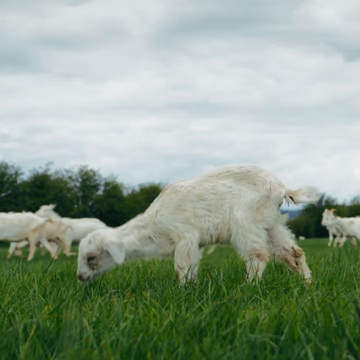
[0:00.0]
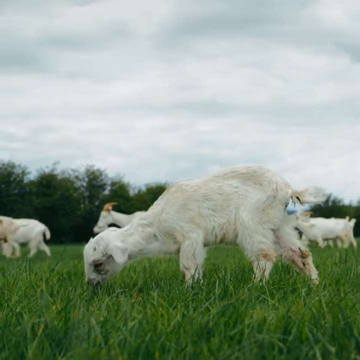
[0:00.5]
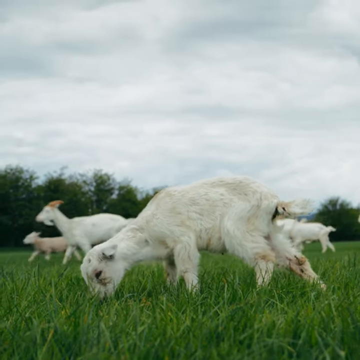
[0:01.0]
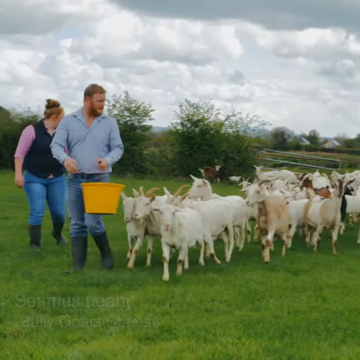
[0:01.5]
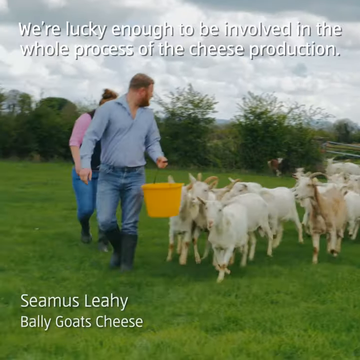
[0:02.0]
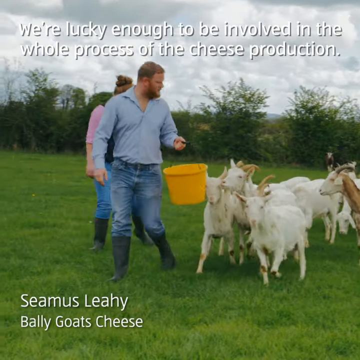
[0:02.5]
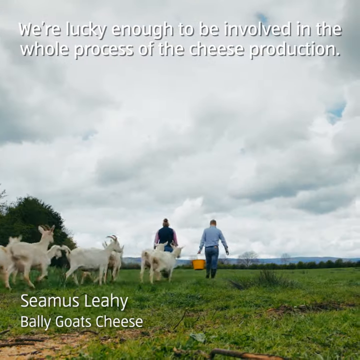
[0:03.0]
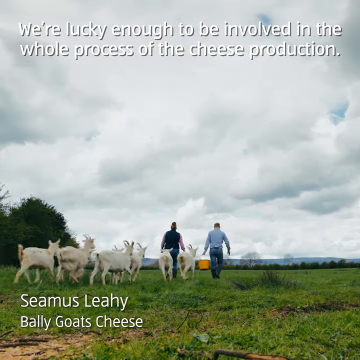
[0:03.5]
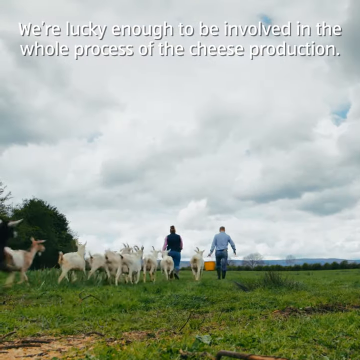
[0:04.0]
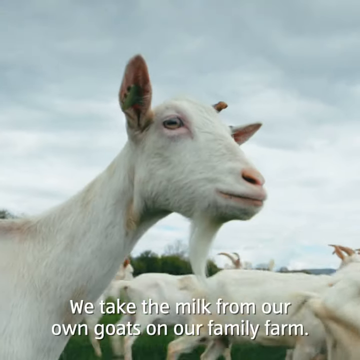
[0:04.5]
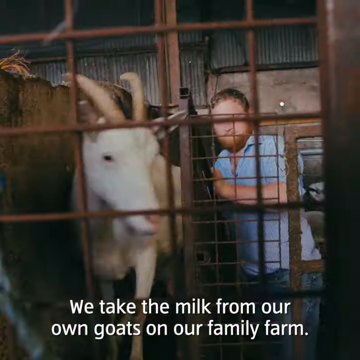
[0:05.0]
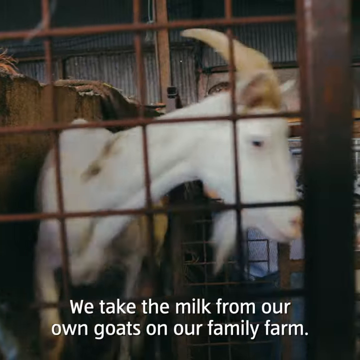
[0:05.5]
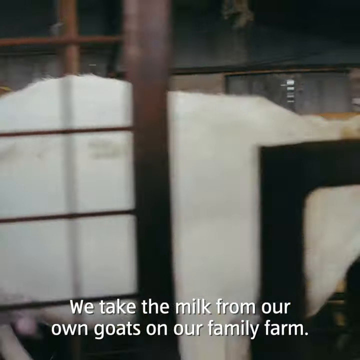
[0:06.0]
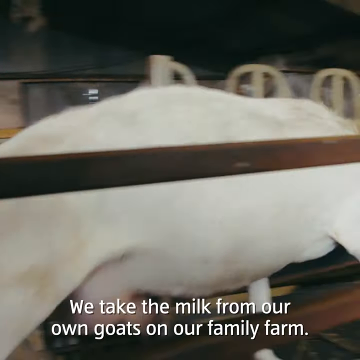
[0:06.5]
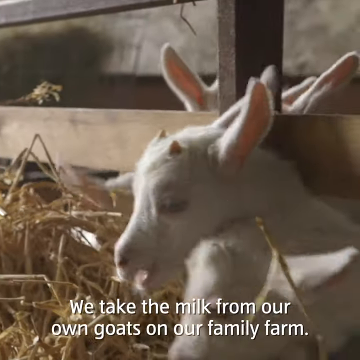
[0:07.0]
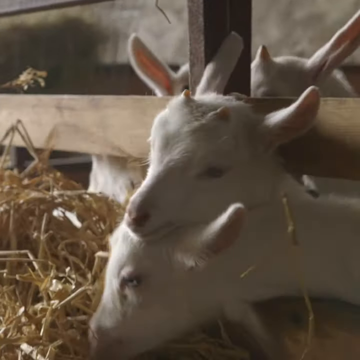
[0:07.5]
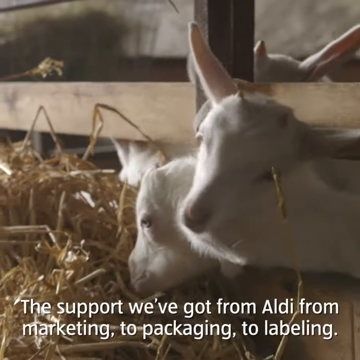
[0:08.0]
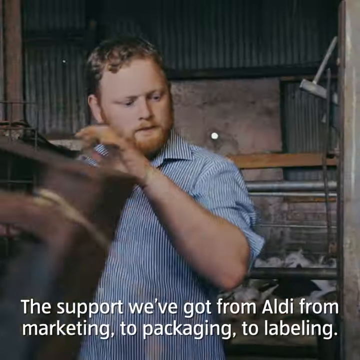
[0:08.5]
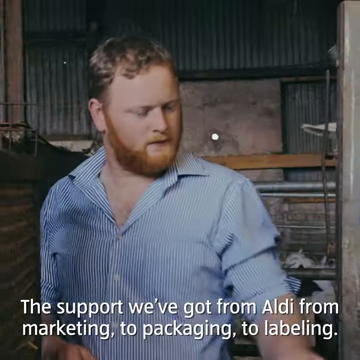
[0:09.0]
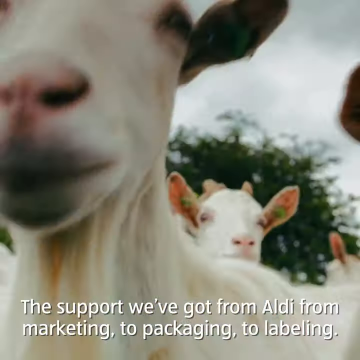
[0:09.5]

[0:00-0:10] A goat appears up close. Text at the top of the screen reads "we're lucky enough to be involved in the whole process of the cheese production." Two people, a girl and a guy, carry a bucket, and the Bally goats follow them. The man's name is Seamus Leahy. Text reads "we take the milk from our own goats," along with mention of the support received from Aldi, from marketing to packaging to labeling. The goats graze in a field and run, following the people for the food in the buckets. The goat milk and cheese are processed and marketed through Aldi, and the farm is possibly not in the United States.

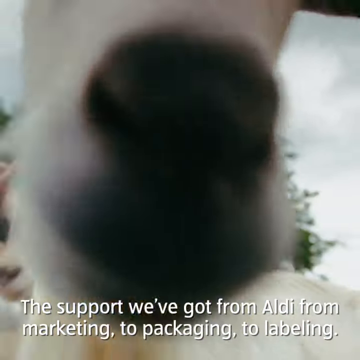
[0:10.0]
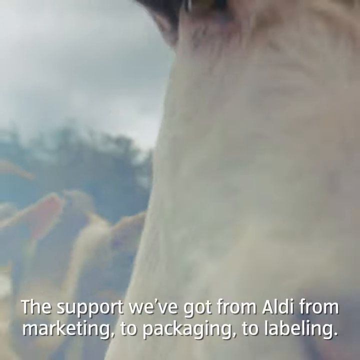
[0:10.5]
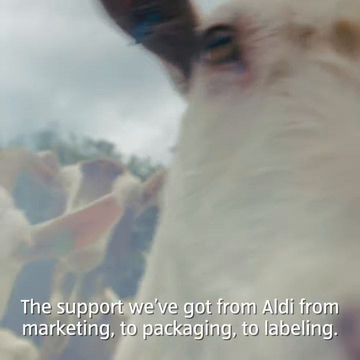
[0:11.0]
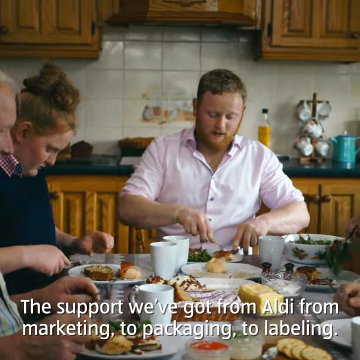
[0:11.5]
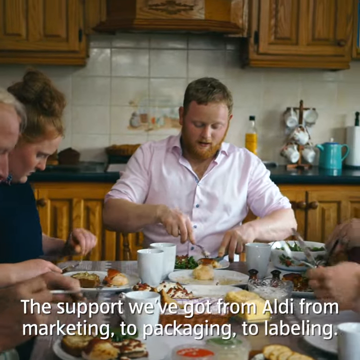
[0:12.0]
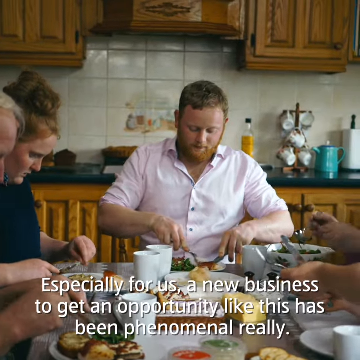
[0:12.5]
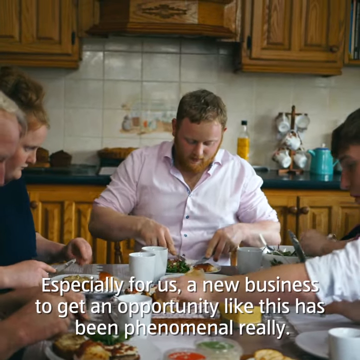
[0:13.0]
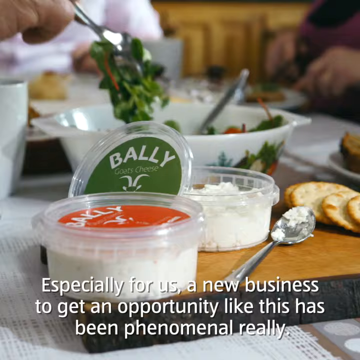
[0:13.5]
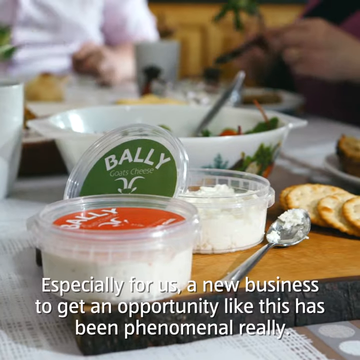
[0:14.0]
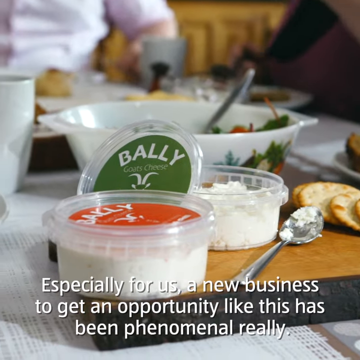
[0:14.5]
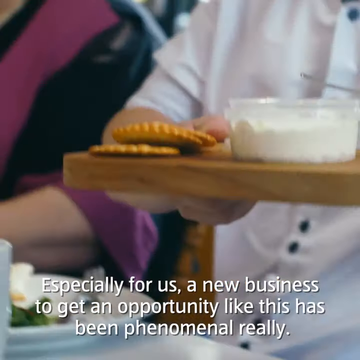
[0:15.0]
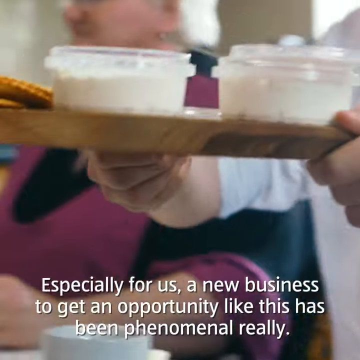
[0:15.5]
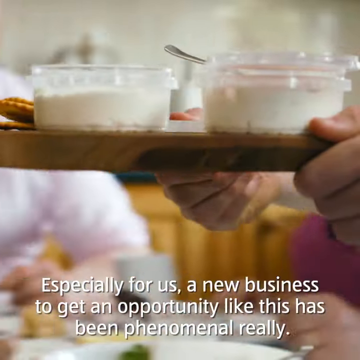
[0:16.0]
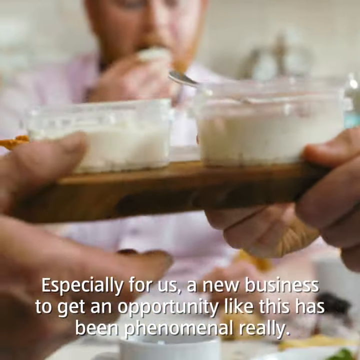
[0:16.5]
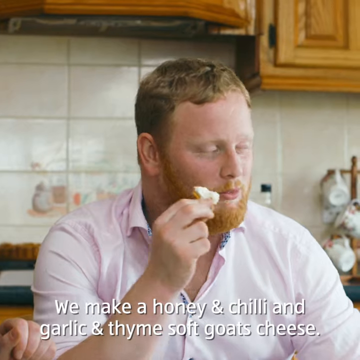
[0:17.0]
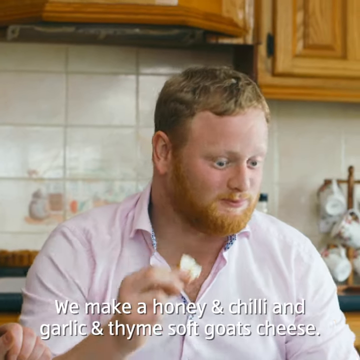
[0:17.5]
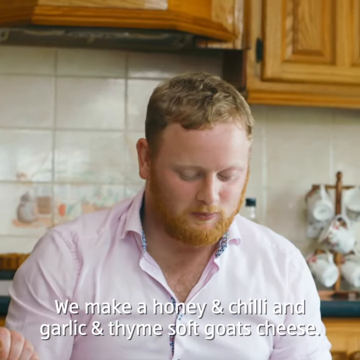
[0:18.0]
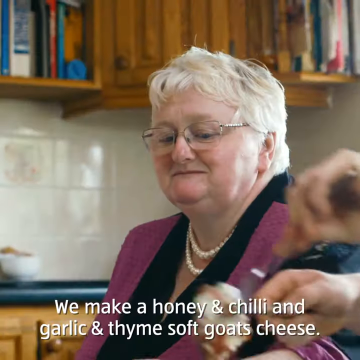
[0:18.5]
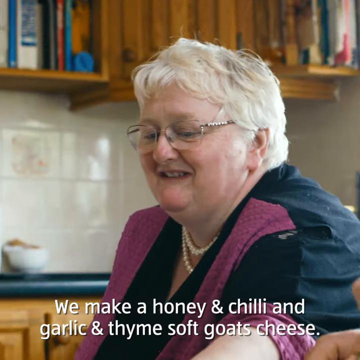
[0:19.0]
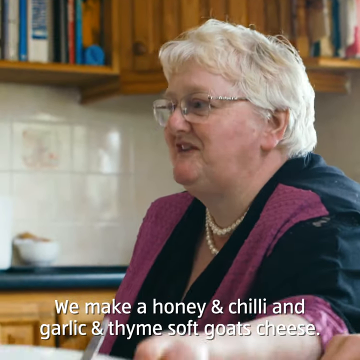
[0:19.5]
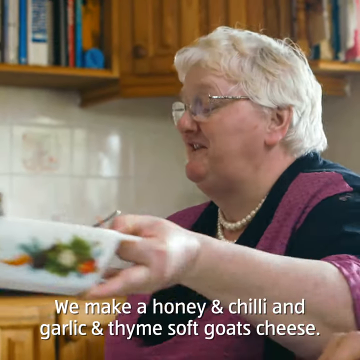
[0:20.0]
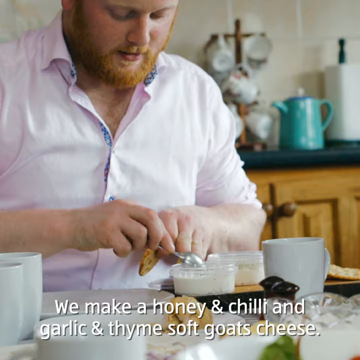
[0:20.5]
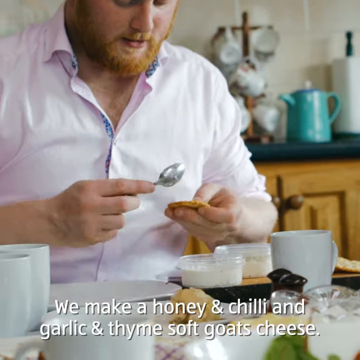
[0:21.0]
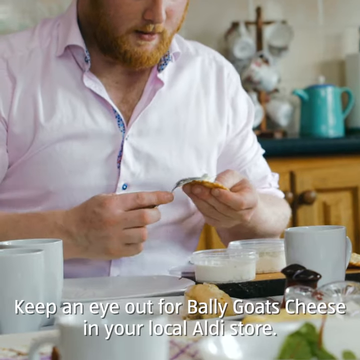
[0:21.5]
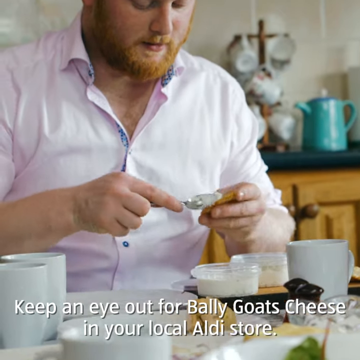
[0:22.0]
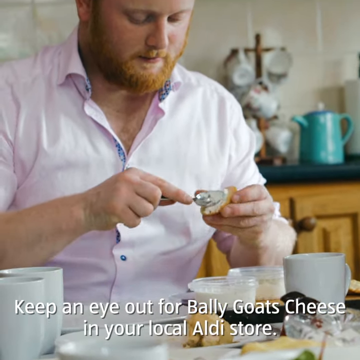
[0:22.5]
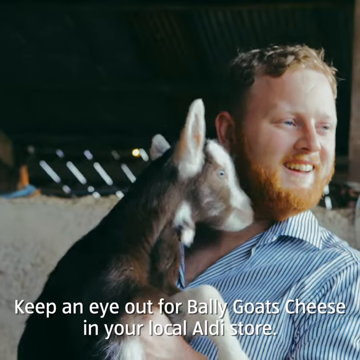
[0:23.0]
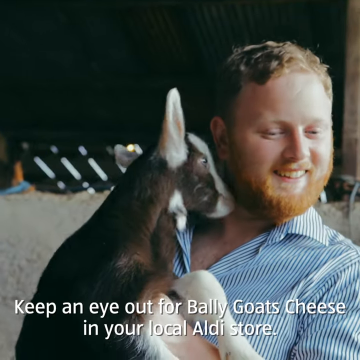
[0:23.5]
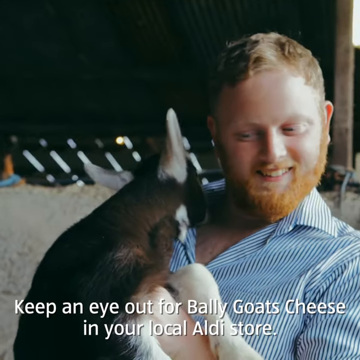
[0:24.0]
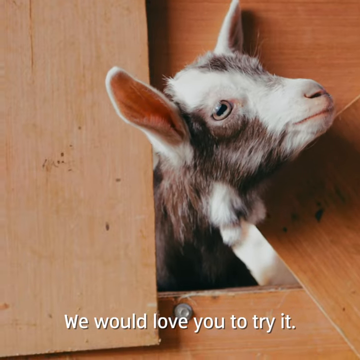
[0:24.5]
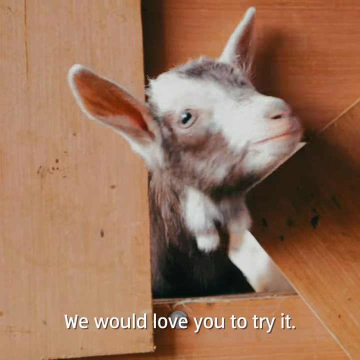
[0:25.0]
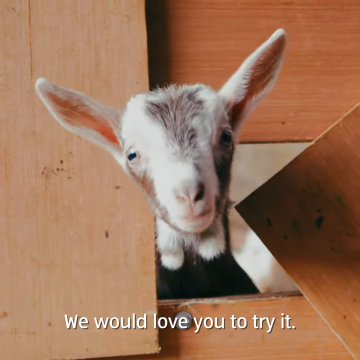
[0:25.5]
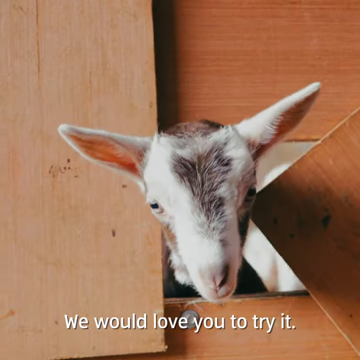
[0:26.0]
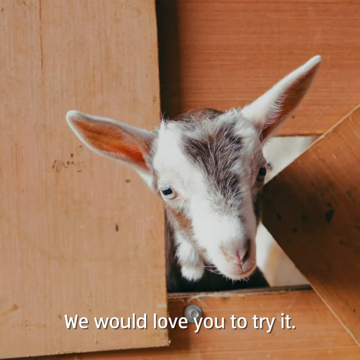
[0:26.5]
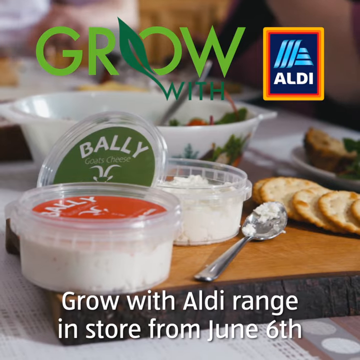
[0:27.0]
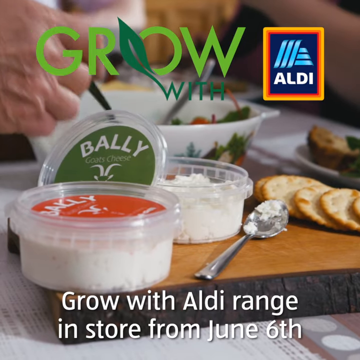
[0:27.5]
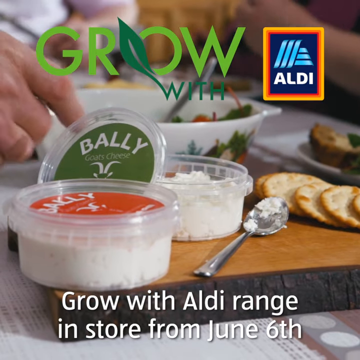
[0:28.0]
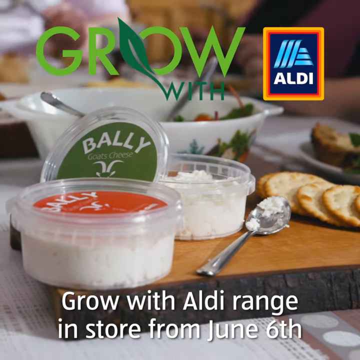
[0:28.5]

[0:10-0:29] Sheep appear, and a family eats with Bally cheese in tubs. Text reads "especially for us a new business to get an opportunity like this has been a phenomenal." The people seem to be in a different country. Their products are honey and chili and garlic and thyme. Text reads "keep an eye out for bally goats cheese in your local area. We would love you to try it." A "grow with Aldi" sign appears on the screen, with "range and store from June 6th." The video shows how the goats are raised: they are well taken care of, fed from a bucket, and called into the barn, which has a lot of hay. The farm is family run. The family sits at the dinner table sharing the products they make and looks very happy; they look like an Irish family. They hold and coddle the goats, and they produce food for Aldi.